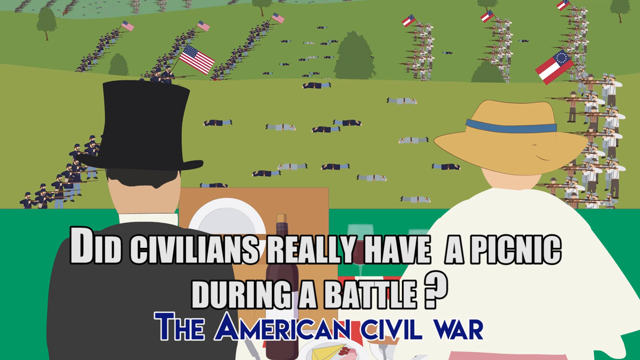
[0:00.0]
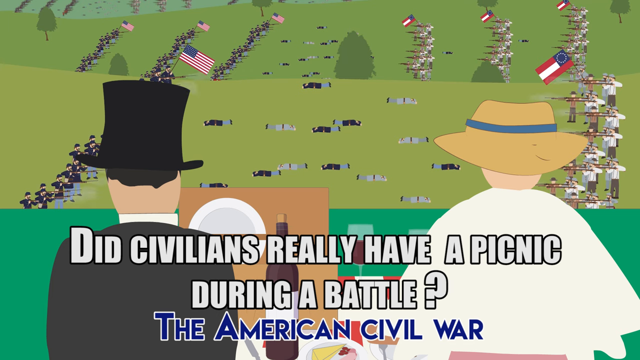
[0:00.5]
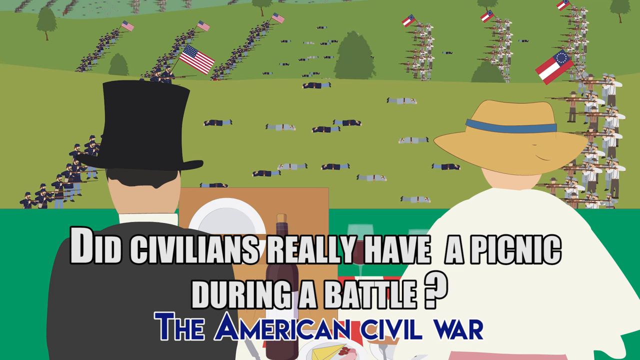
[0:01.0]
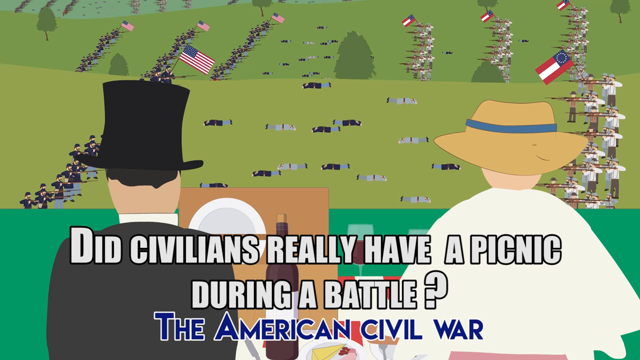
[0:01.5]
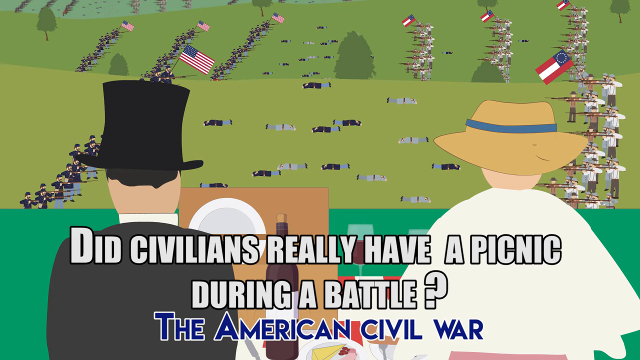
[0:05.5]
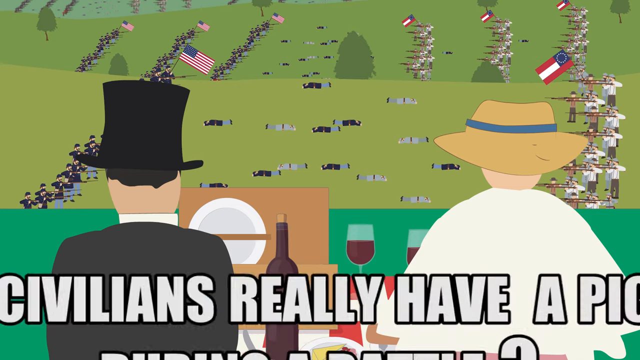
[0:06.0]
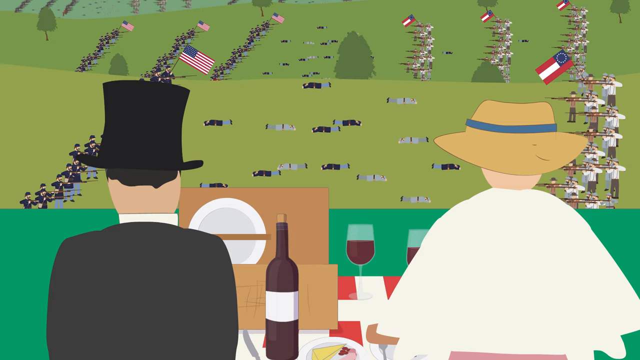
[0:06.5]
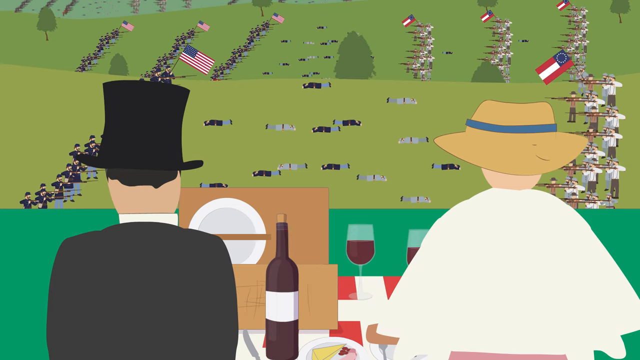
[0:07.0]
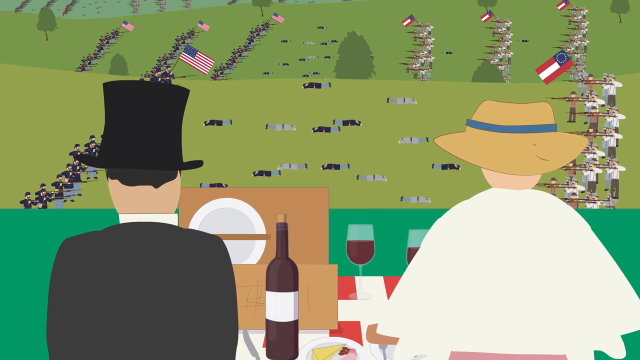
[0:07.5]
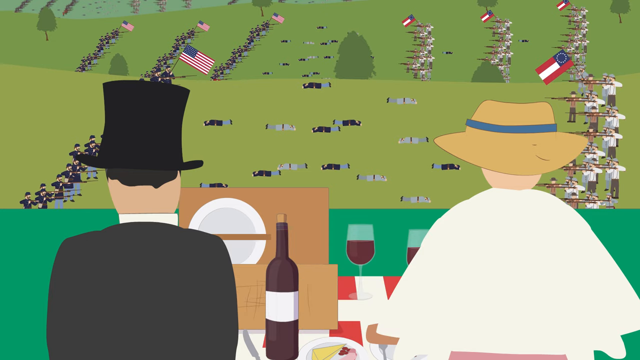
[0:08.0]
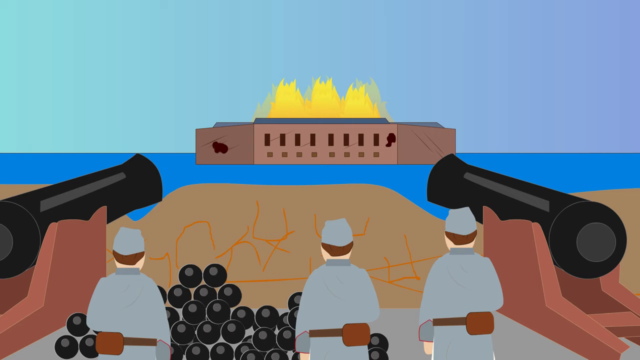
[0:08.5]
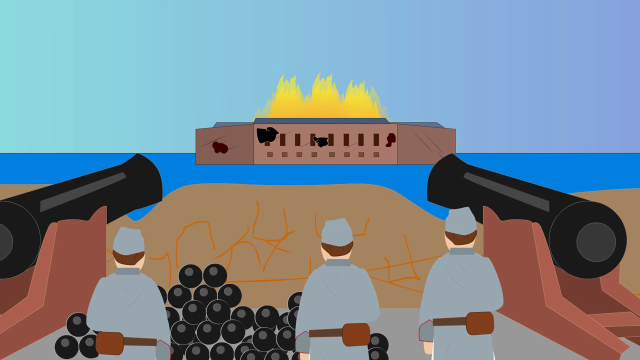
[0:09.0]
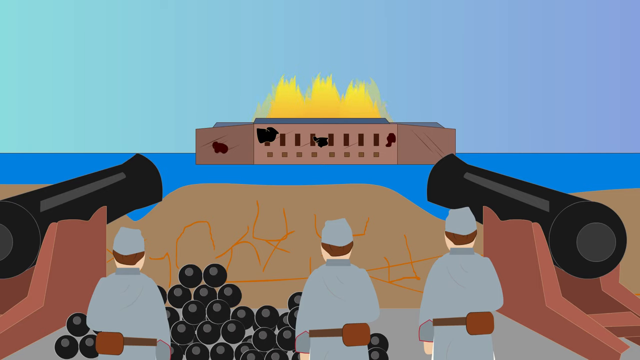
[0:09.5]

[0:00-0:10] Text on the screen reads "did civilians really have a picnic during a battle?" and underneath it says "the American Civil War." In the foreground, two people are having a picnic on a hillside while watching a Civil War battle play out on the fields and valleys below them. The next screen shows a group of military people firing cannons at a fort.